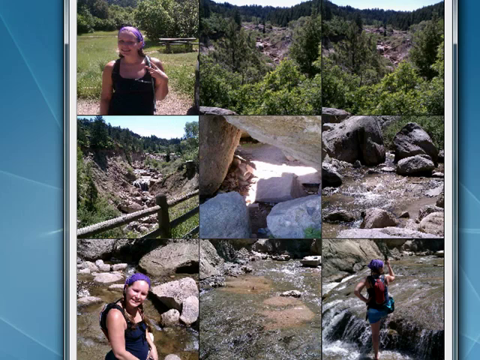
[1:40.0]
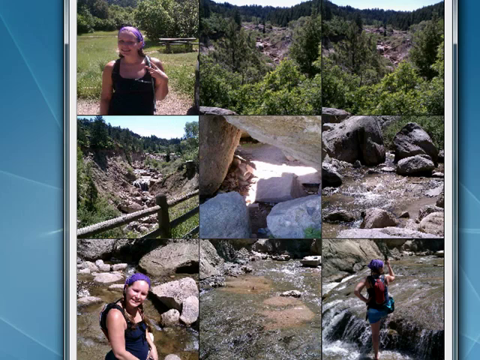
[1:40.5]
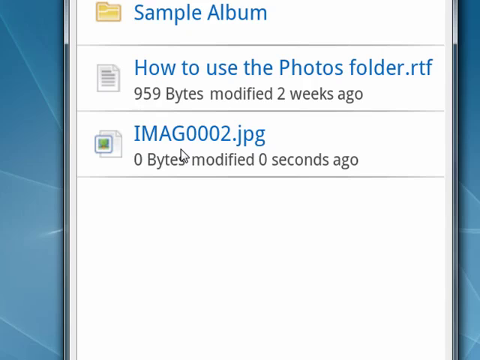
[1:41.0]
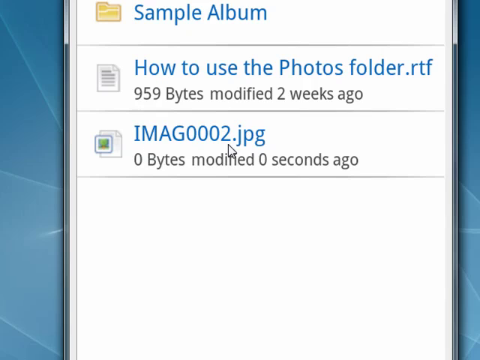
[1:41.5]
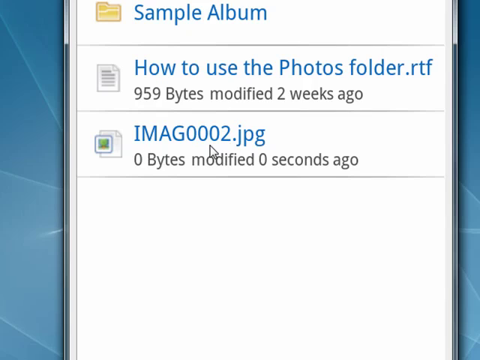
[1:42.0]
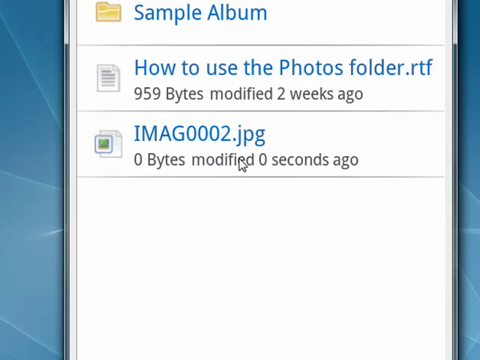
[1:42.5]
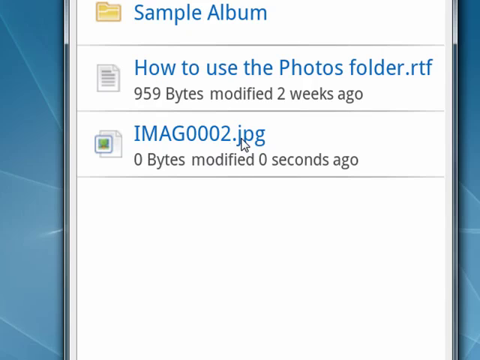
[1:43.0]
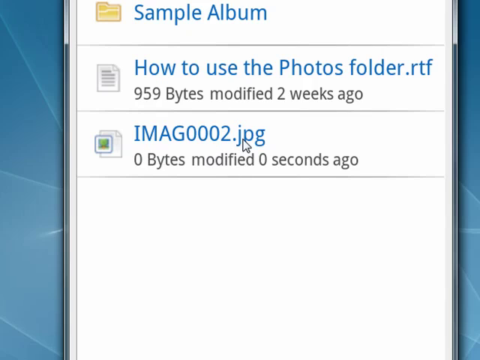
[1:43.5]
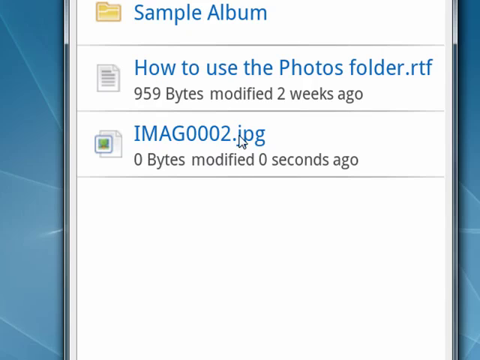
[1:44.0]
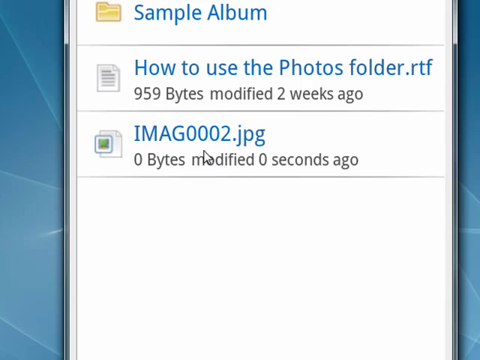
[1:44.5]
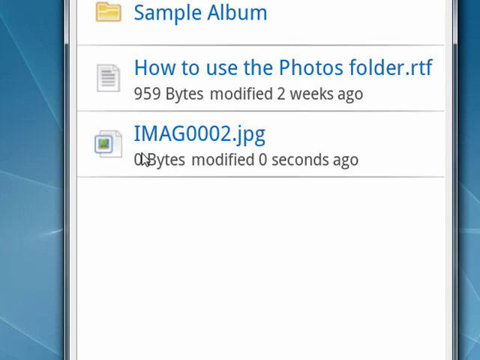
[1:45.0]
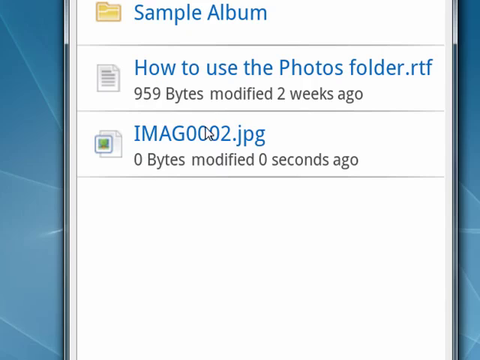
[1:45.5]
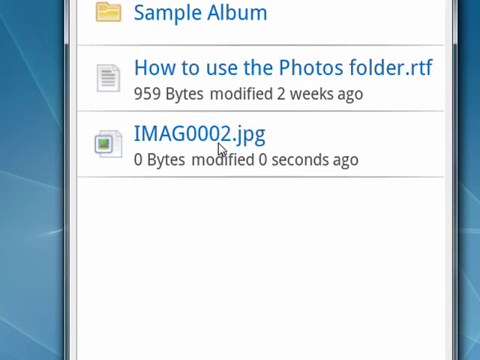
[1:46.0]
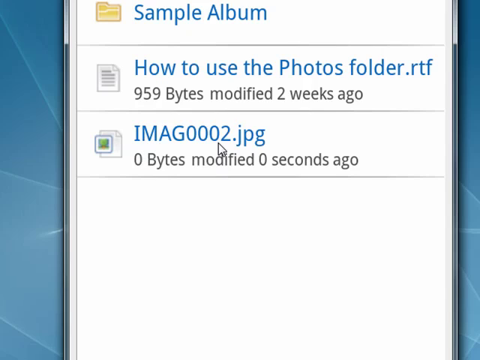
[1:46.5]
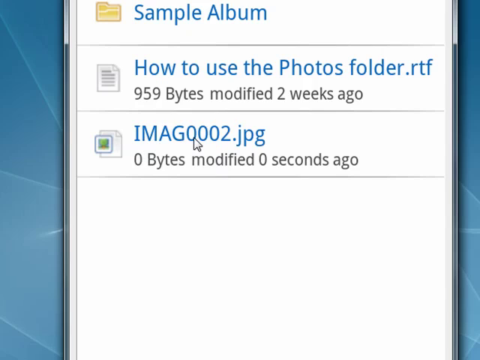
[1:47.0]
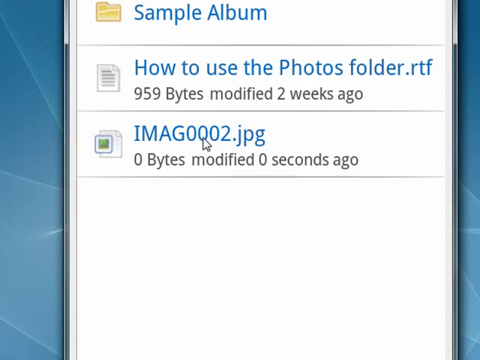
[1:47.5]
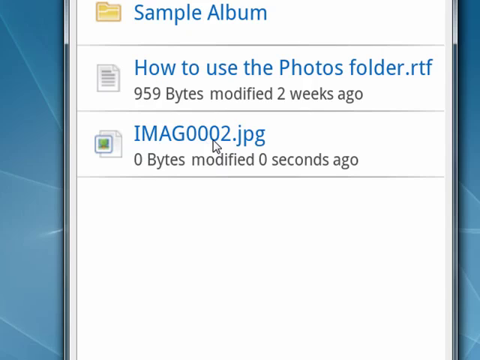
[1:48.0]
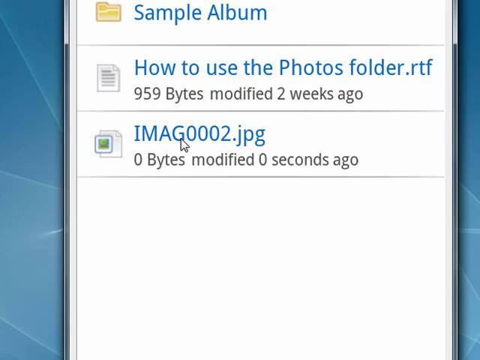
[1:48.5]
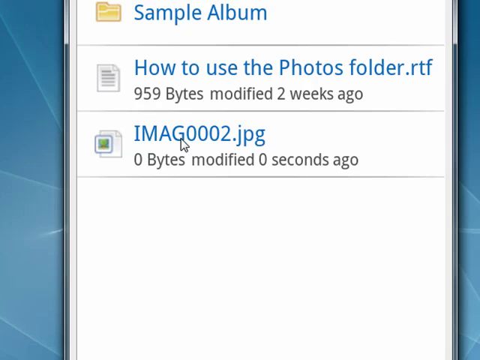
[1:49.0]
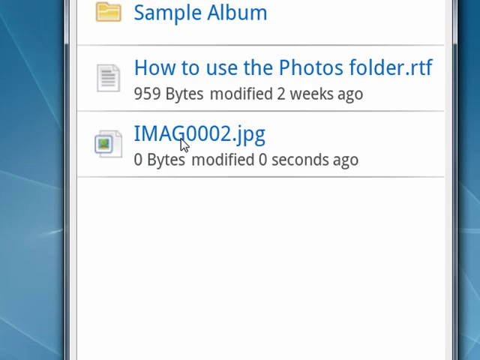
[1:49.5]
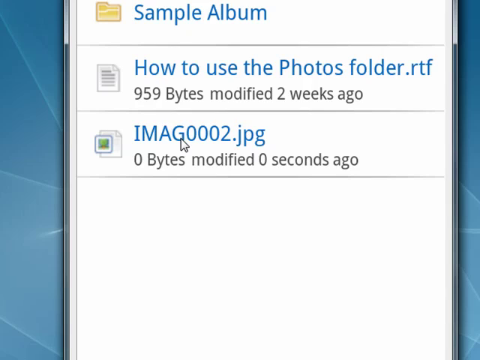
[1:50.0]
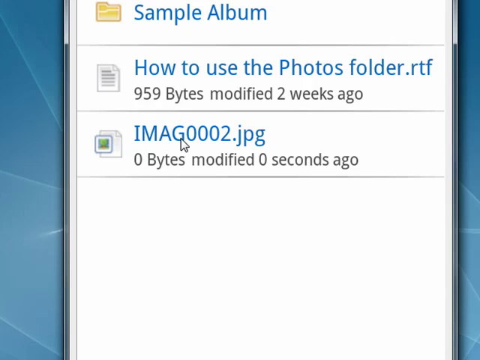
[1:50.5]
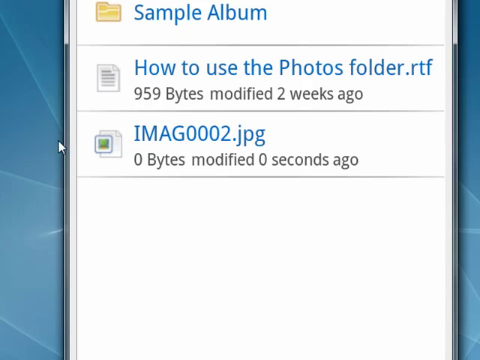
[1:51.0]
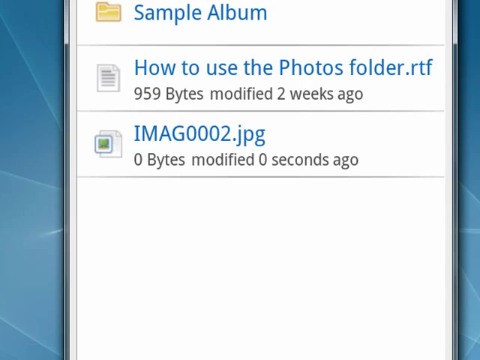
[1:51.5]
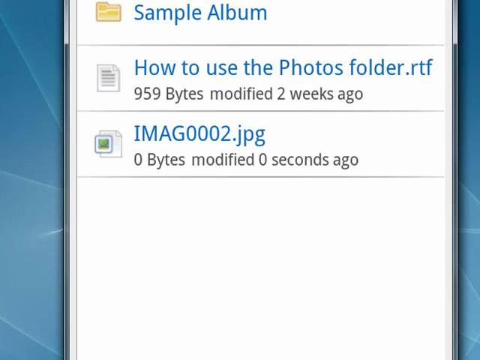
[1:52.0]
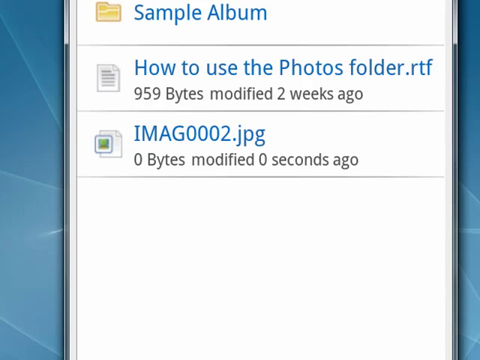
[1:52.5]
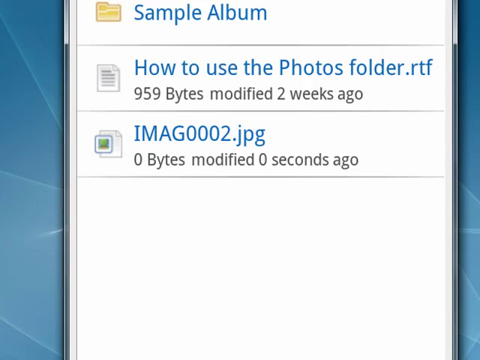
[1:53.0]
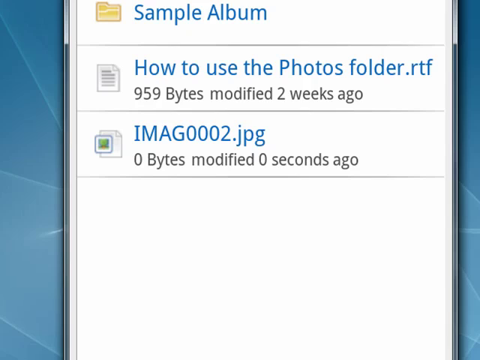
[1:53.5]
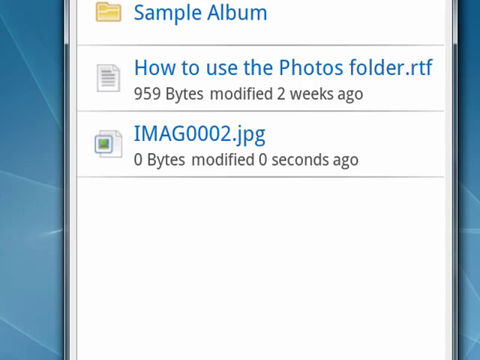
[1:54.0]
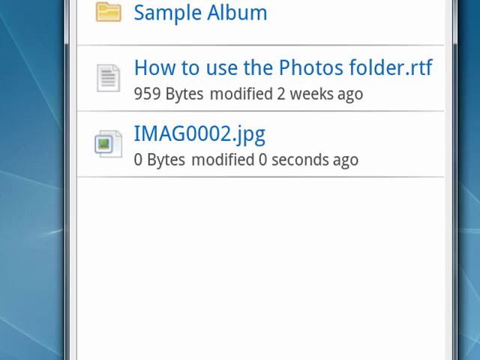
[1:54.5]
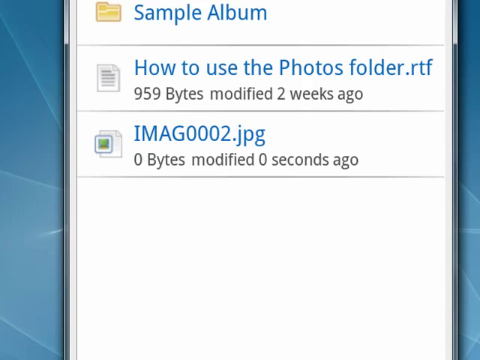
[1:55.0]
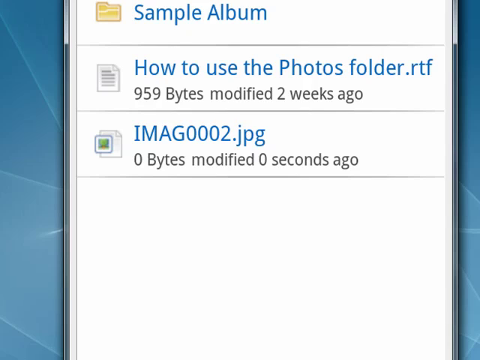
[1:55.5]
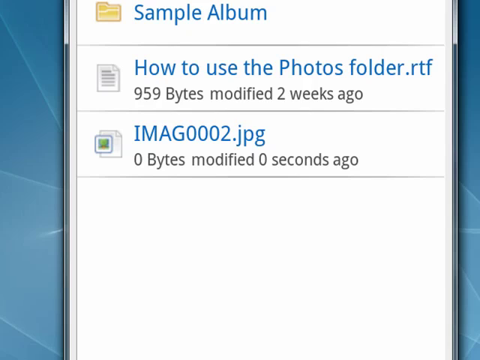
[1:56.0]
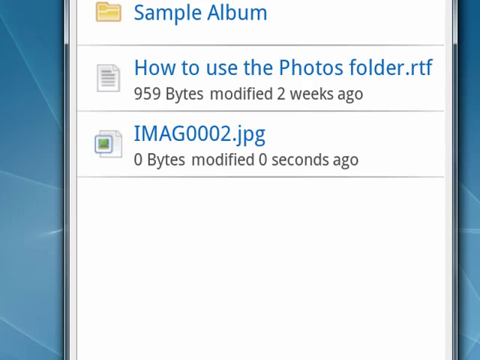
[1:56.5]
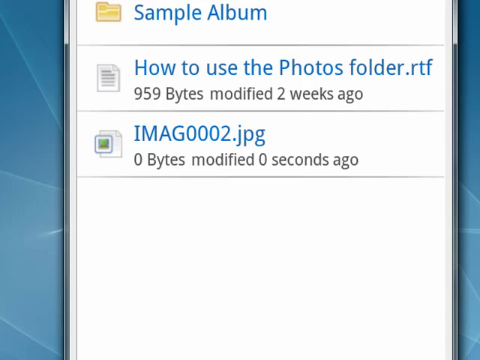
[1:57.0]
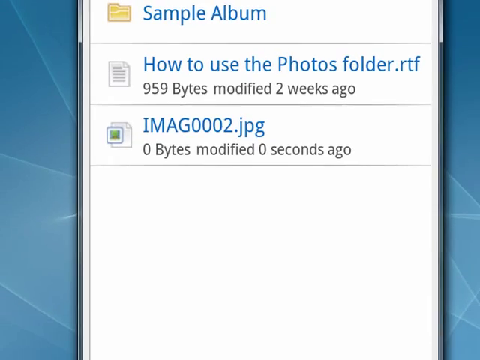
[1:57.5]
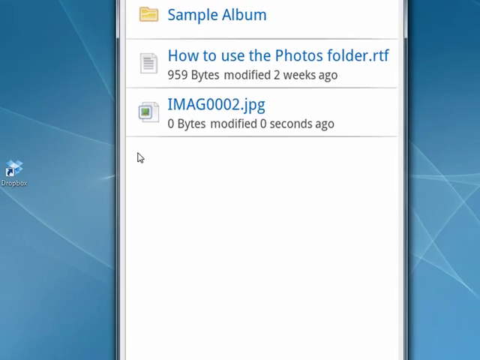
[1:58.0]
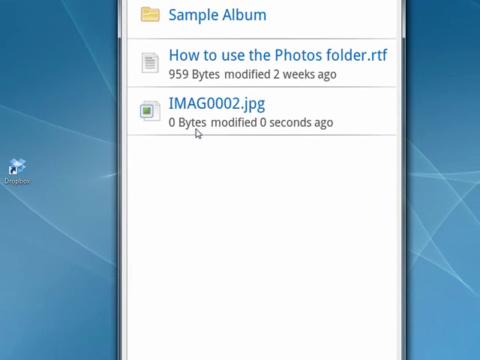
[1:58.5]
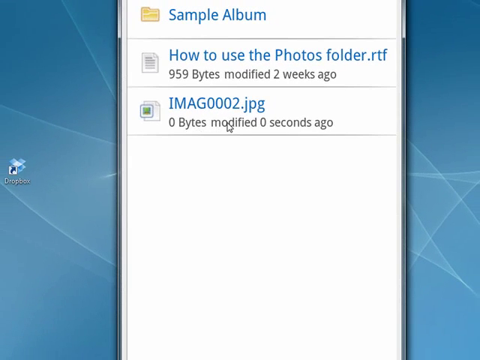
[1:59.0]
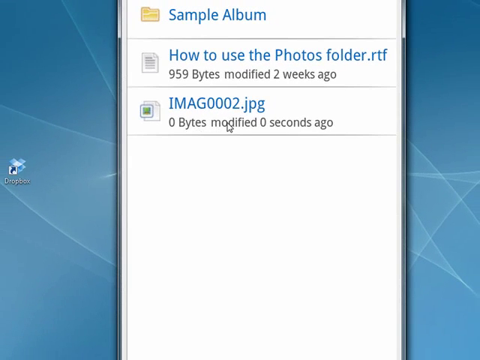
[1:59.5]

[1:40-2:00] Nine images are visible, three of them showing the girl. She wears a headband, her hair is down in pigtails, and she seems to have on a black shirt and turquoise shorts. Other images show where she is hiking: rocky, mountainous terrain with large boulders. Then another page shows options to choose from: "sample album", "how to use the photos folder.rtf" and "imag0002.jpg". A mouse pointer comes onto the screen and seems to highlight the imag file. Under it the text reads "0 bytes modified 0 seconds ago", and under the how-to-use file it reads "959 bytes modified 2 weeks ago".